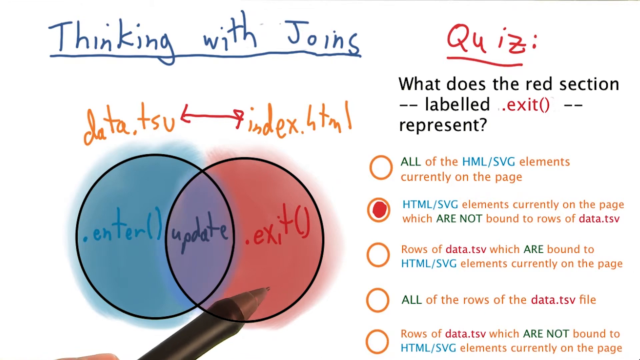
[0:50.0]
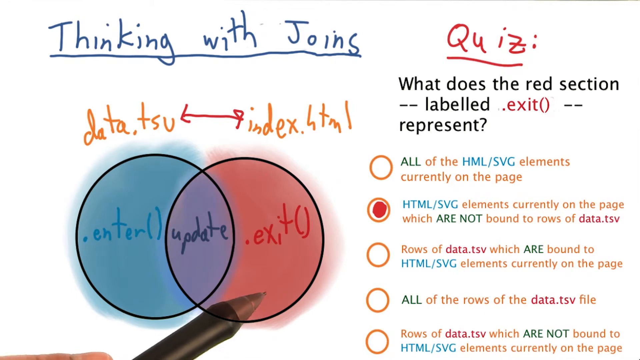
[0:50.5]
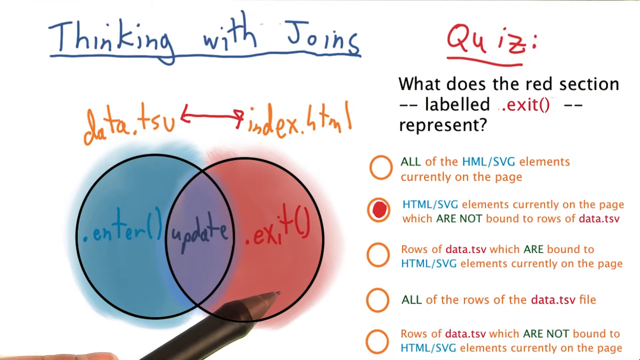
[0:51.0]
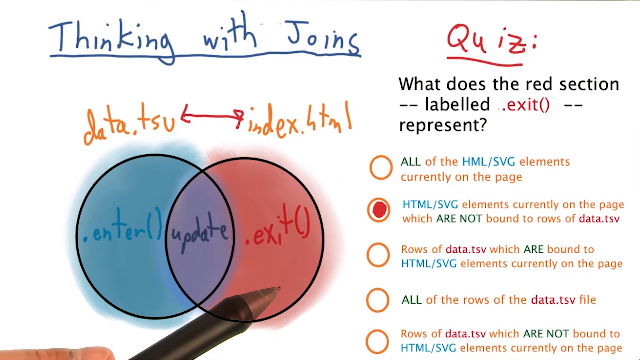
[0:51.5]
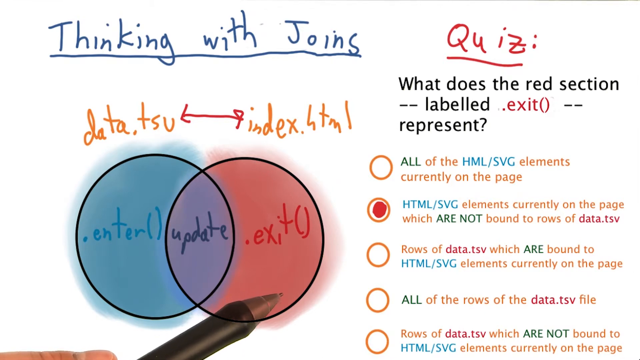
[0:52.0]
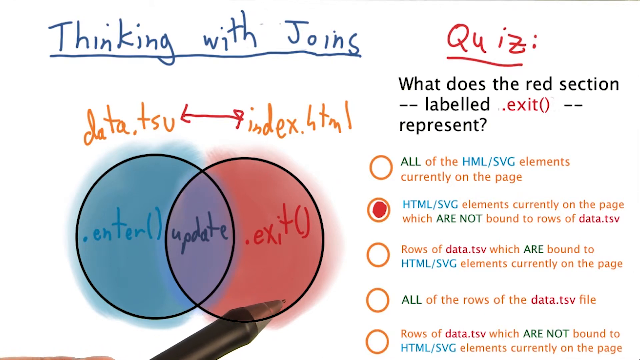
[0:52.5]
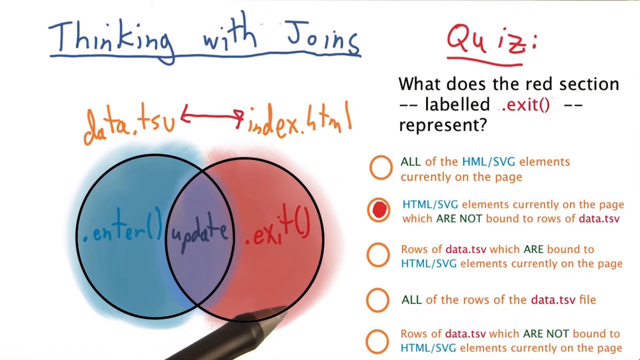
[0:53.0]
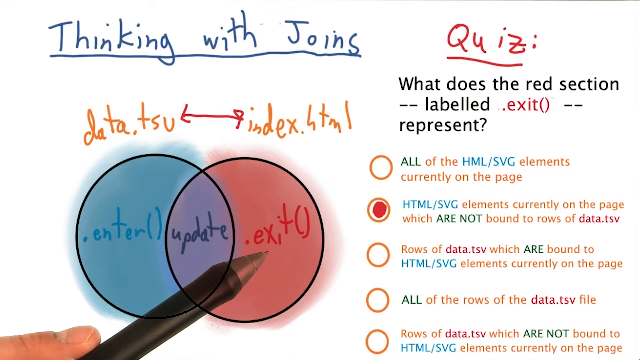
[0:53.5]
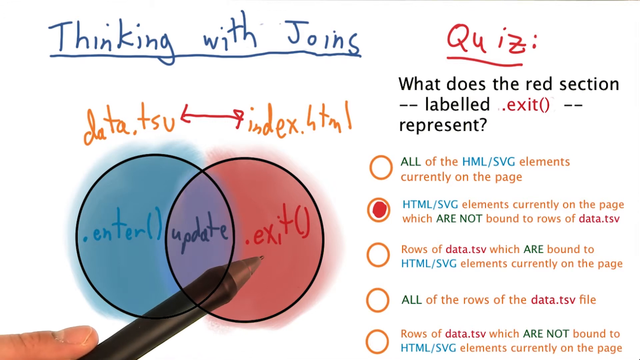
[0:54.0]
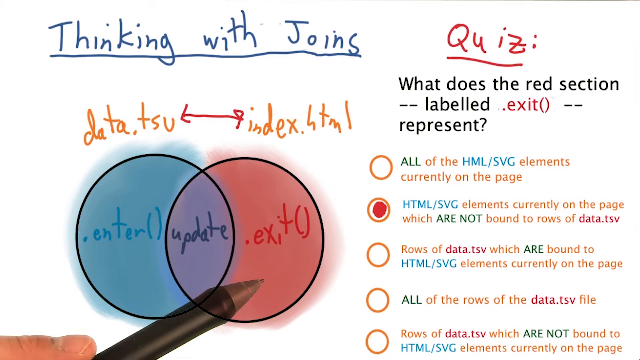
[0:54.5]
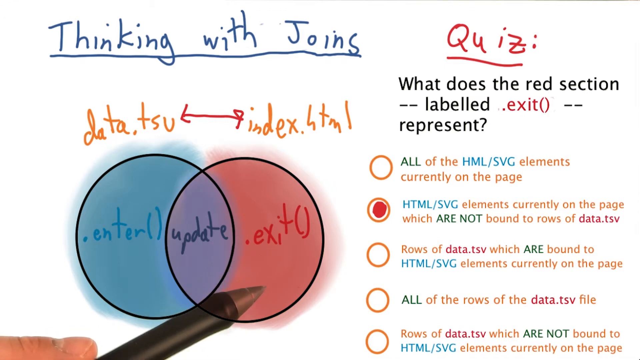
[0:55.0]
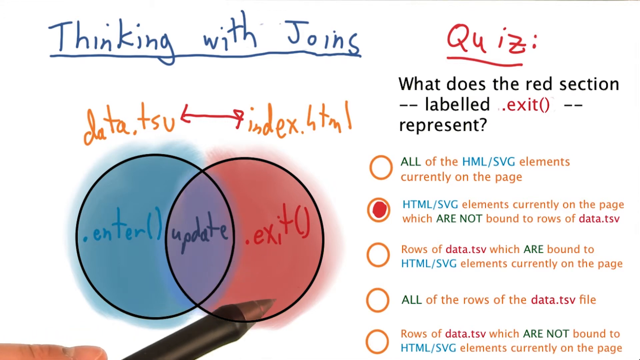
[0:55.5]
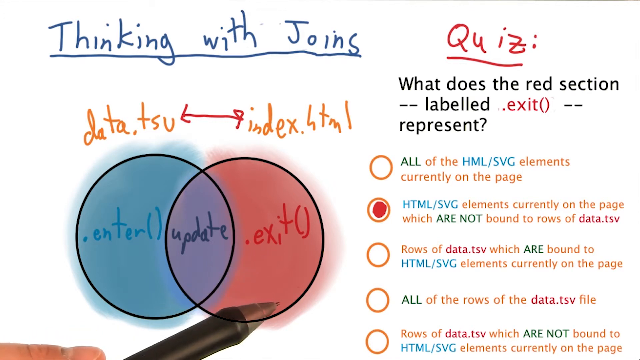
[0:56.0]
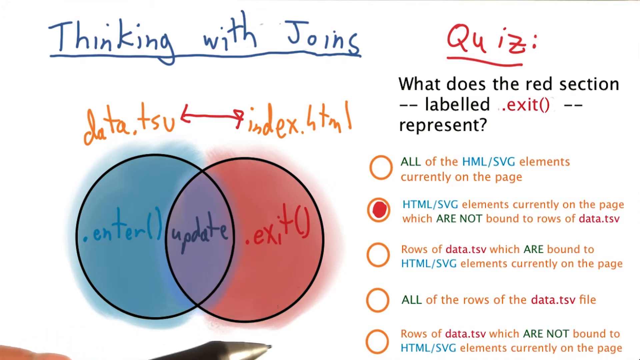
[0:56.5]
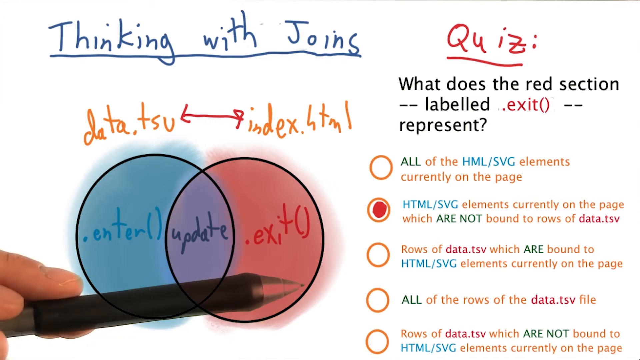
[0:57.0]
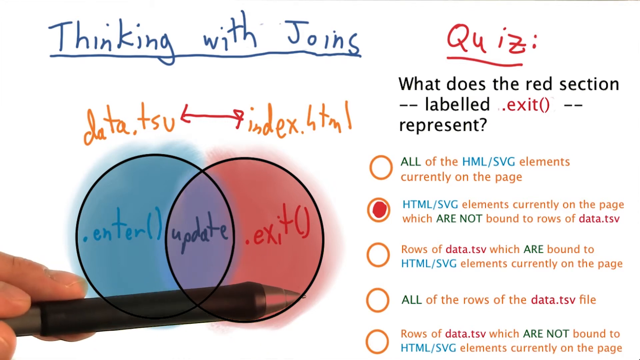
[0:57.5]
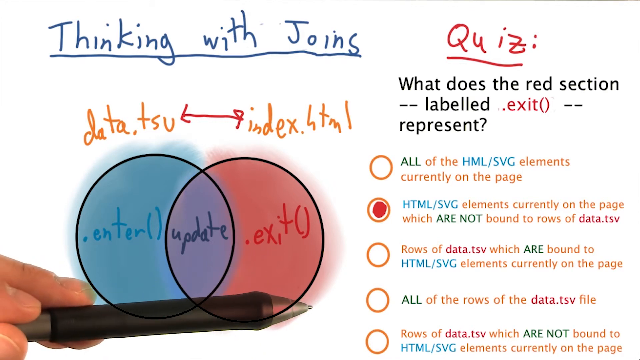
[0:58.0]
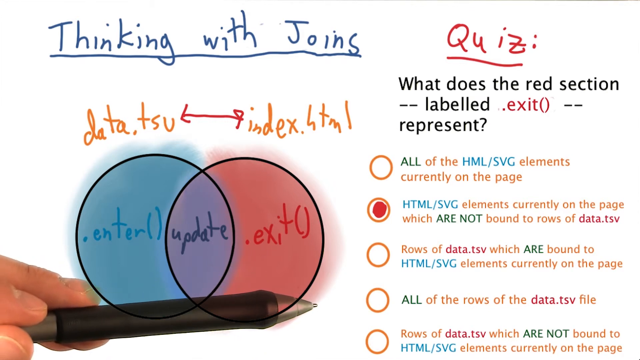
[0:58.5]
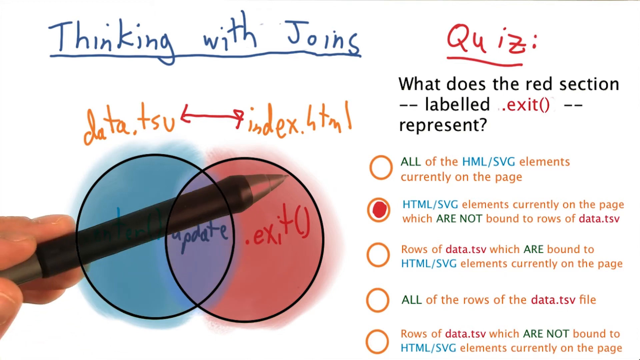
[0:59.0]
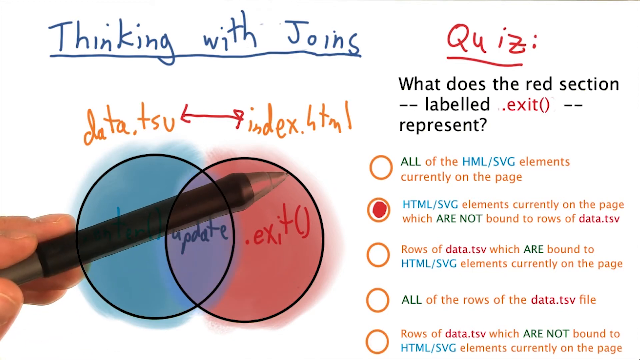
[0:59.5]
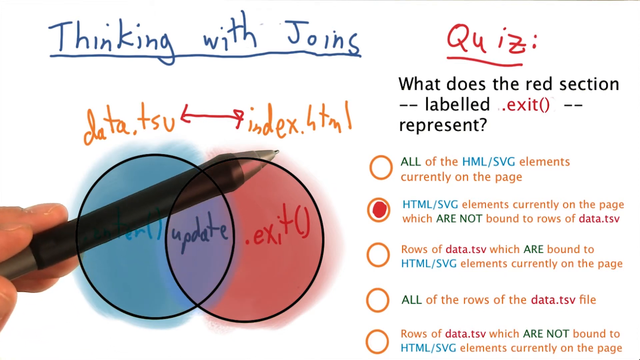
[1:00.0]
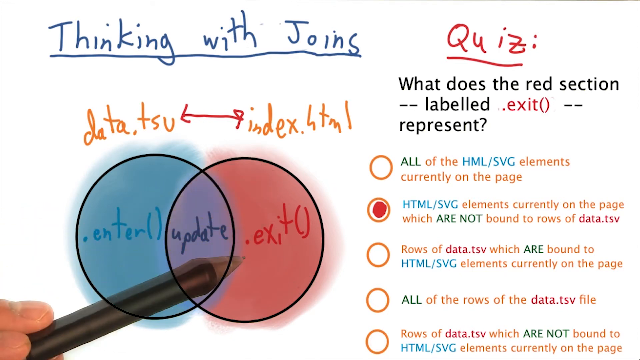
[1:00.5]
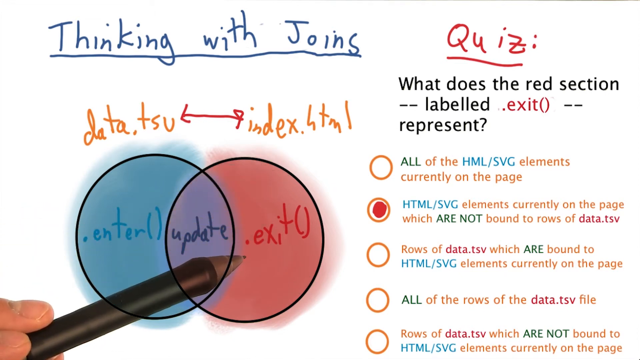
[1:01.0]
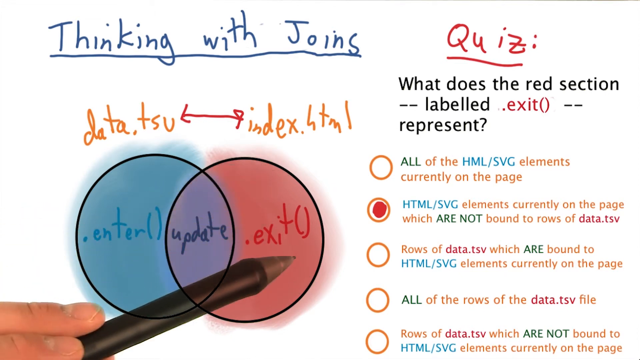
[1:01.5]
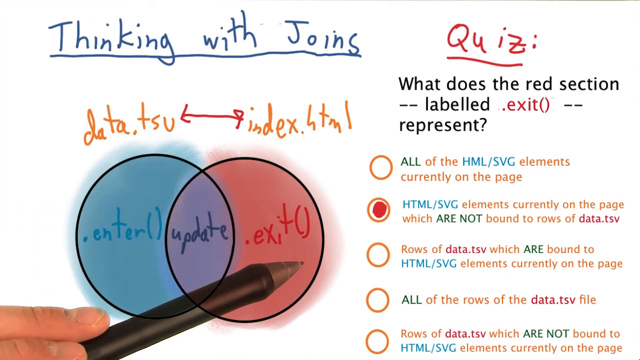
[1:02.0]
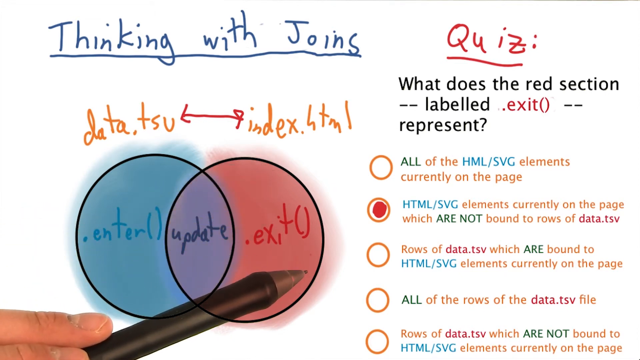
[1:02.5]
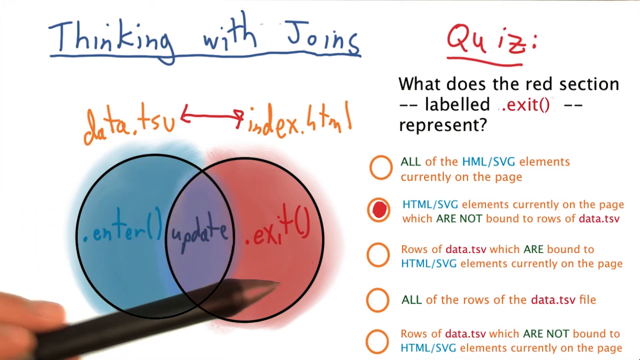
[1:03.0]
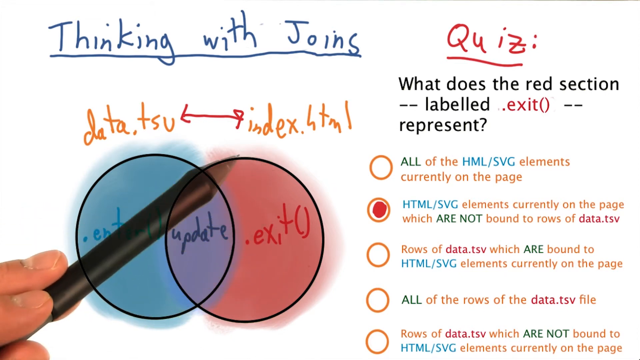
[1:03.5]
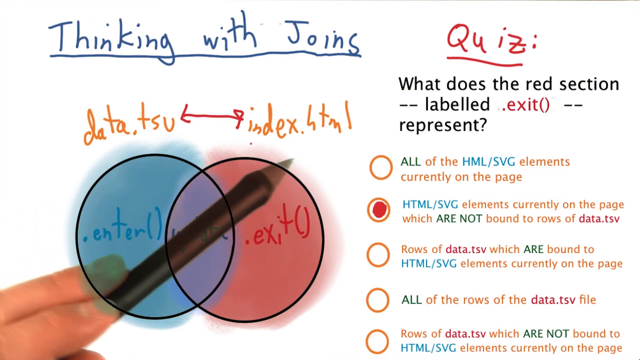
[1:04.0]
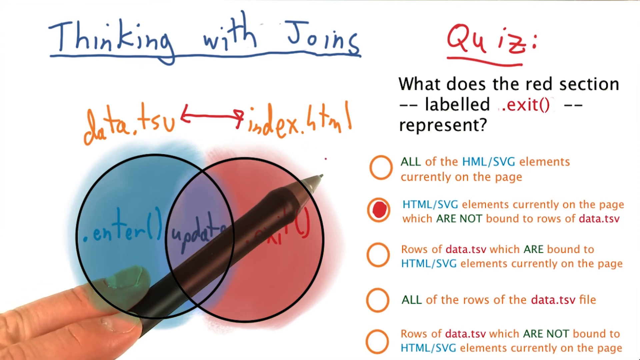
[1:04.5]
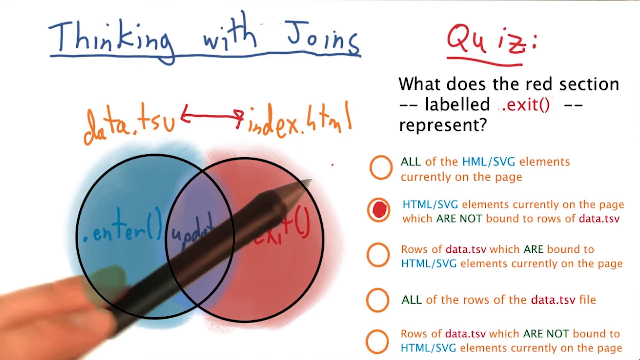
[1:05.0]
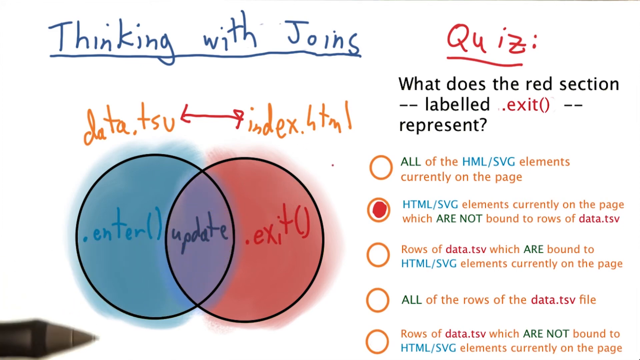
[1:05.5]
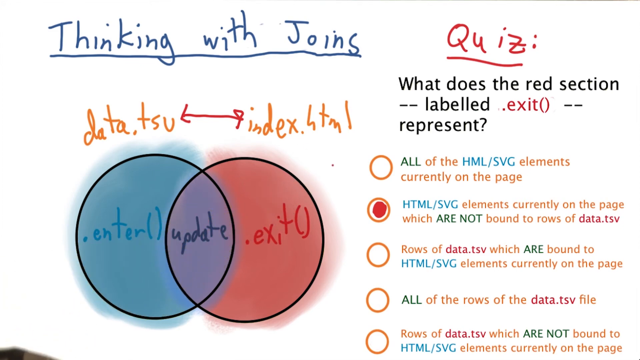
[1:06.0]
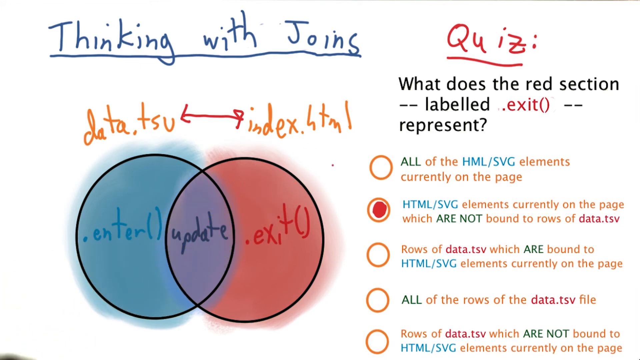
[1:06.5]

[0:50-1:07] The pen keeps hovering on the red section of the Venn diagram, the right side labeled ".exit()", moving up and down a little as the teacher discusses that side, probably explaining further why the second quiz option is the correct choice. The pen then moves a little more quickly. It slides off screen before coming back up, now held in a new direction but still indicating the right side of the diagram. The teacher moves the pen in all sorts of directions over the right side of the Venn diagram.